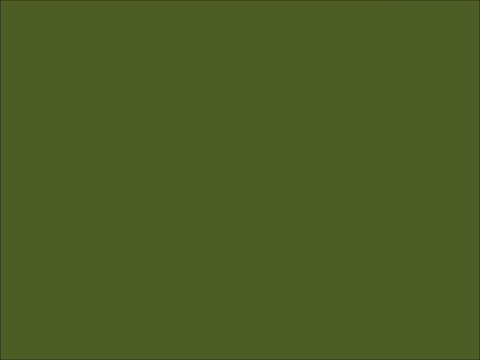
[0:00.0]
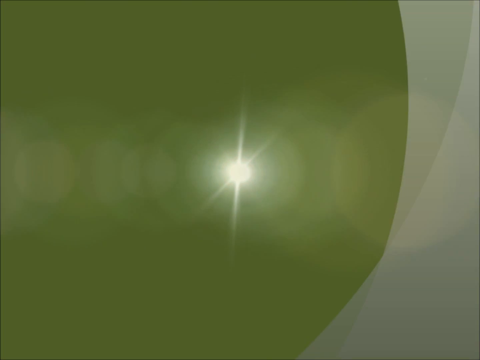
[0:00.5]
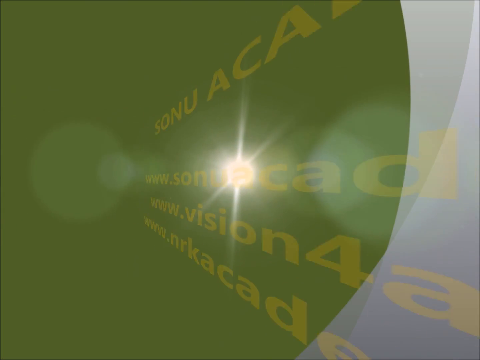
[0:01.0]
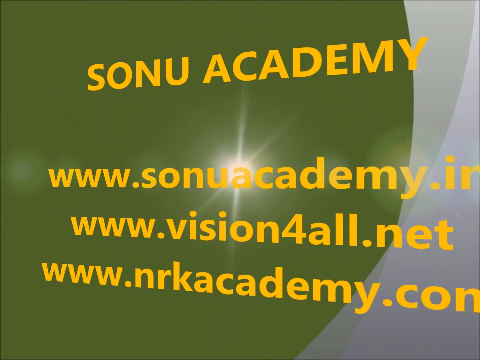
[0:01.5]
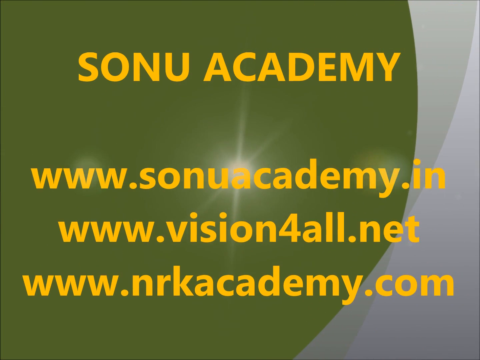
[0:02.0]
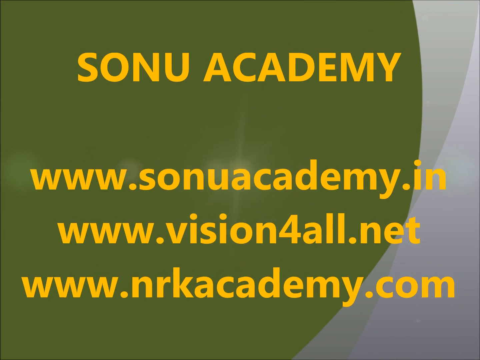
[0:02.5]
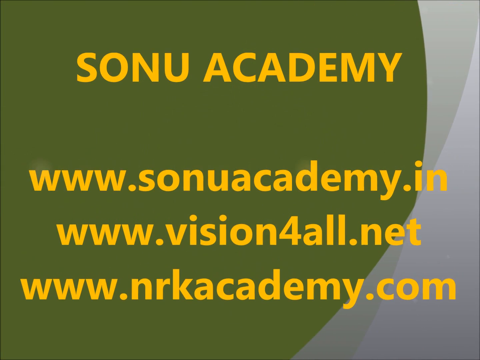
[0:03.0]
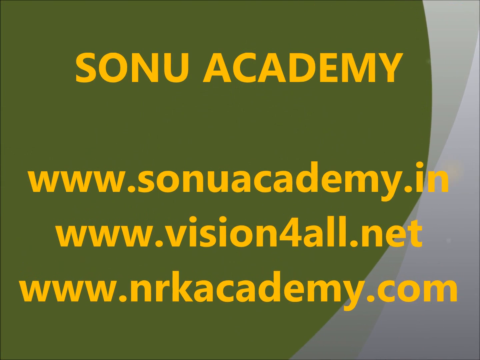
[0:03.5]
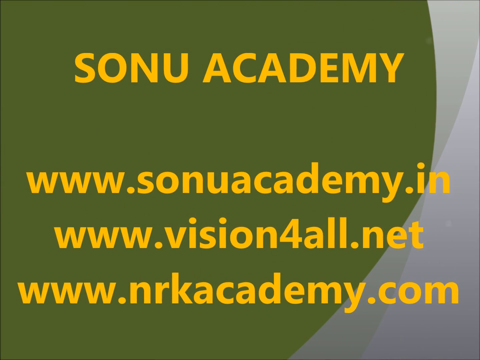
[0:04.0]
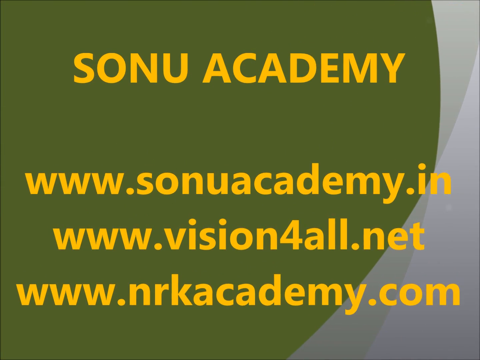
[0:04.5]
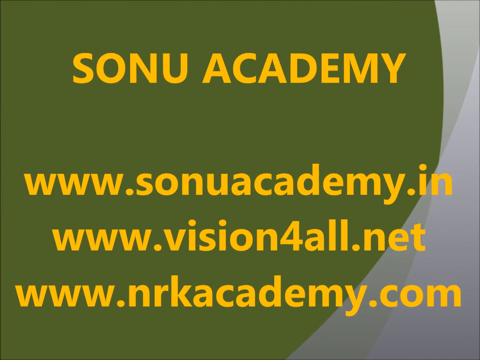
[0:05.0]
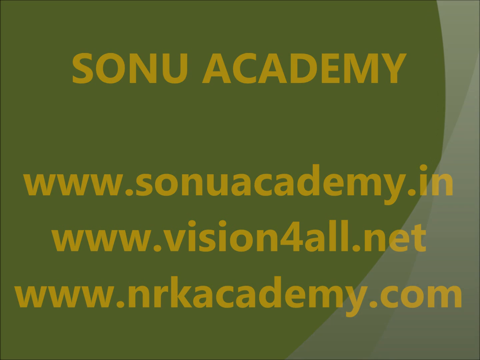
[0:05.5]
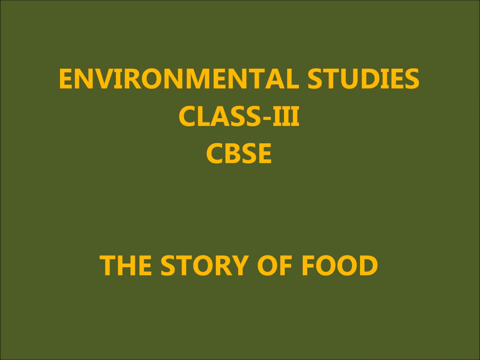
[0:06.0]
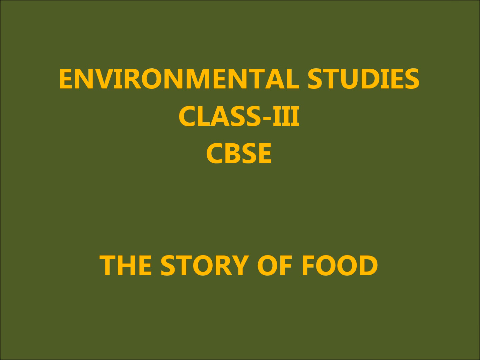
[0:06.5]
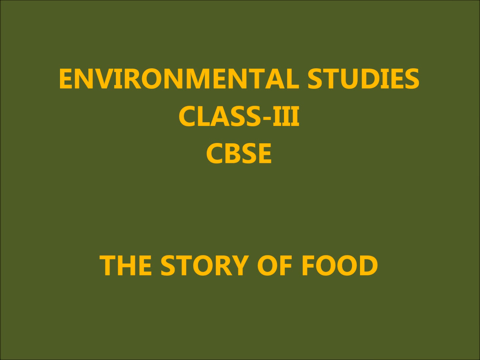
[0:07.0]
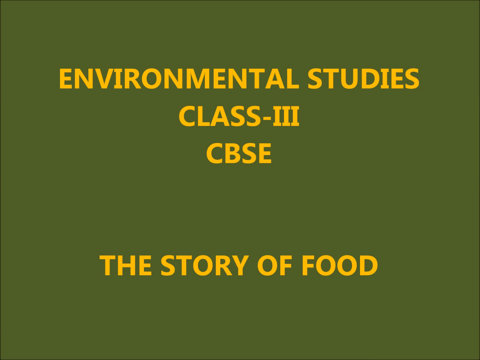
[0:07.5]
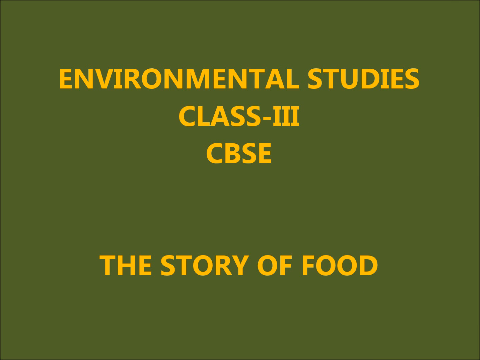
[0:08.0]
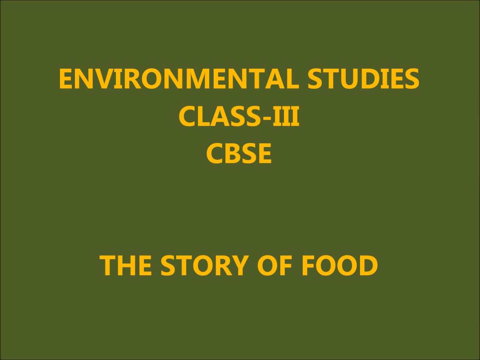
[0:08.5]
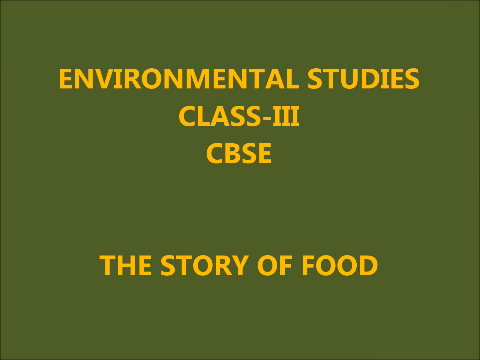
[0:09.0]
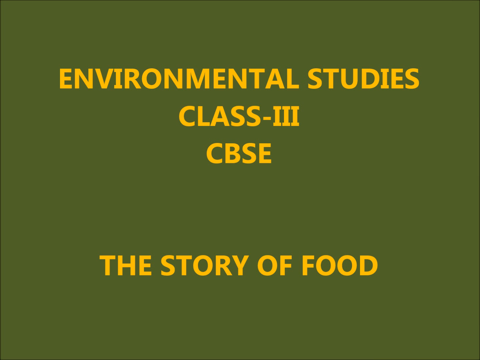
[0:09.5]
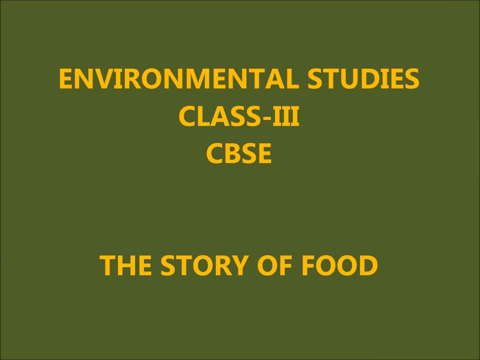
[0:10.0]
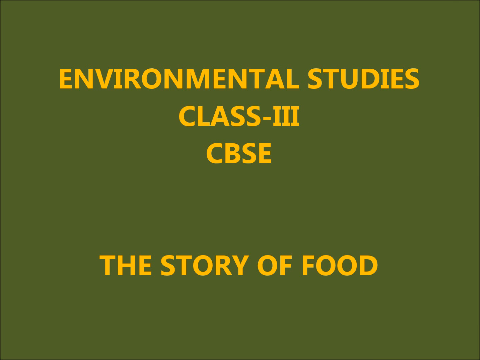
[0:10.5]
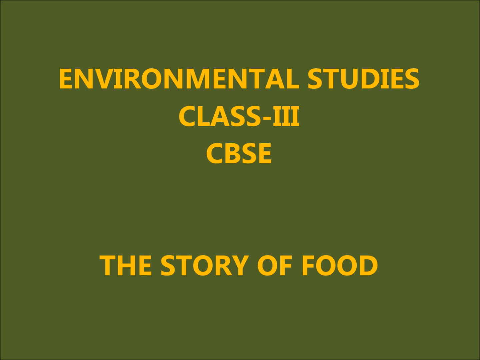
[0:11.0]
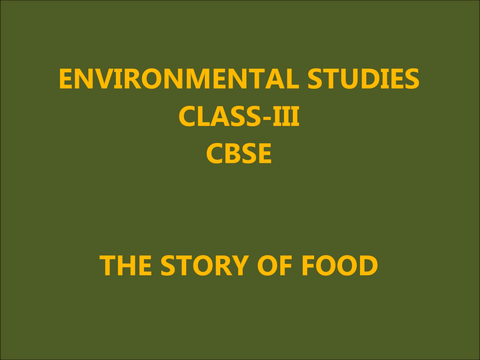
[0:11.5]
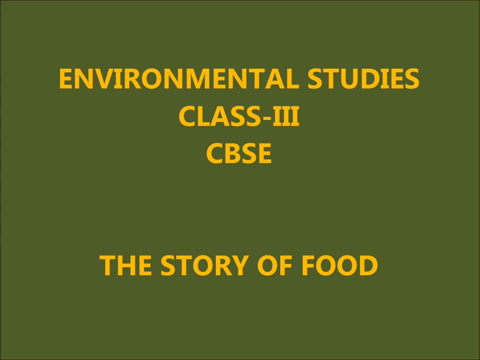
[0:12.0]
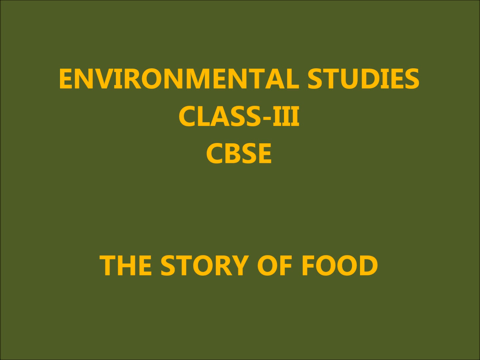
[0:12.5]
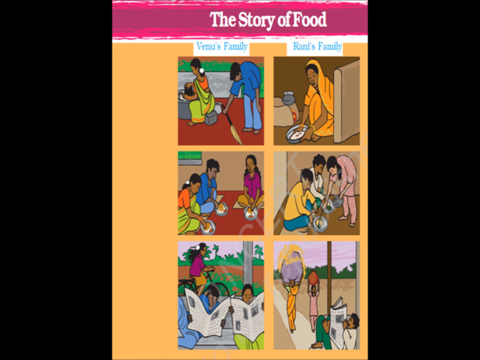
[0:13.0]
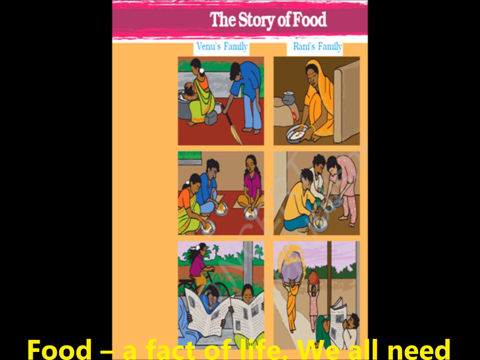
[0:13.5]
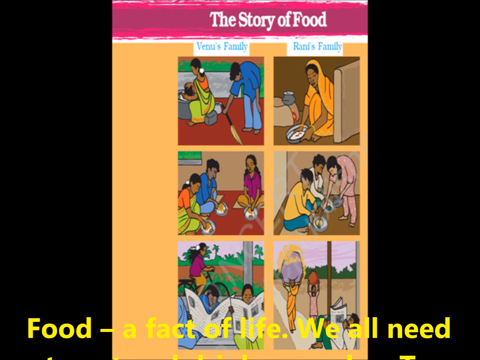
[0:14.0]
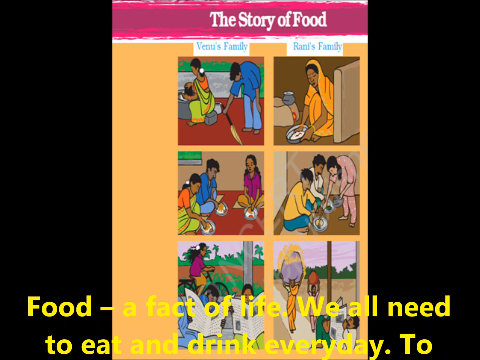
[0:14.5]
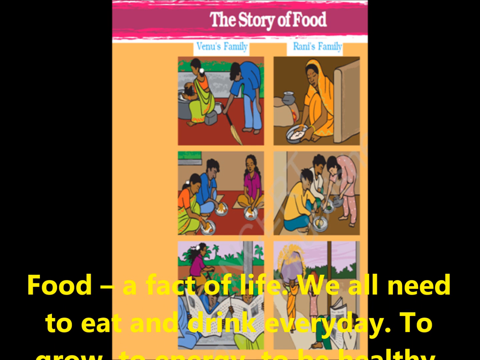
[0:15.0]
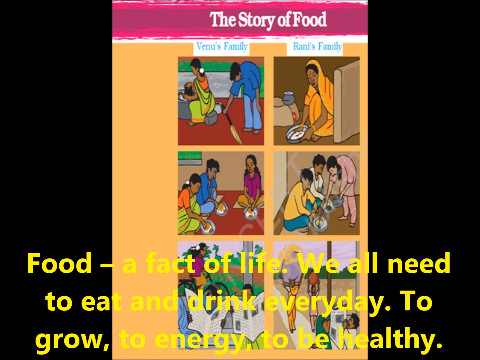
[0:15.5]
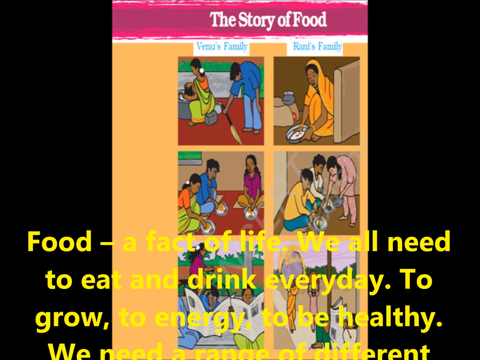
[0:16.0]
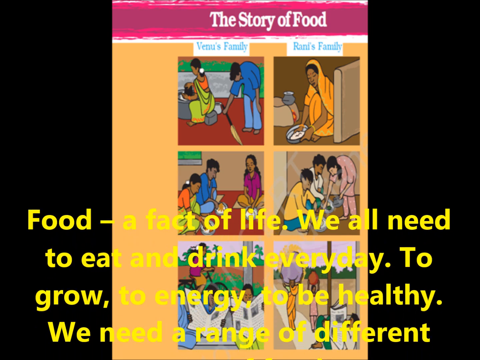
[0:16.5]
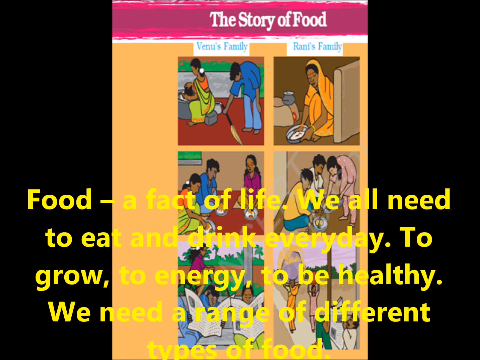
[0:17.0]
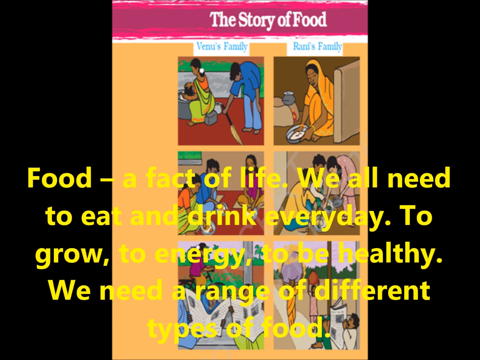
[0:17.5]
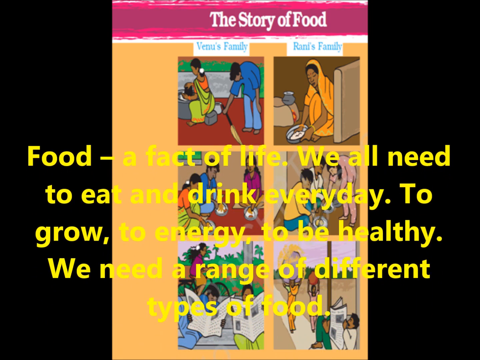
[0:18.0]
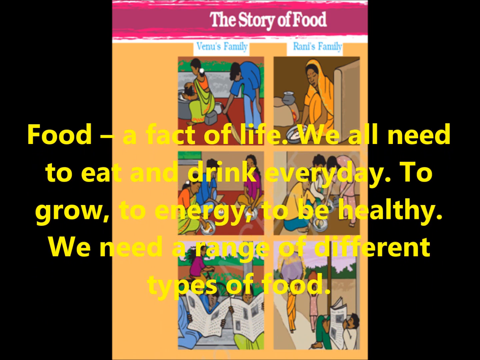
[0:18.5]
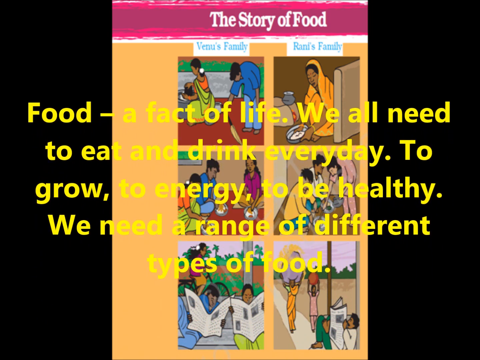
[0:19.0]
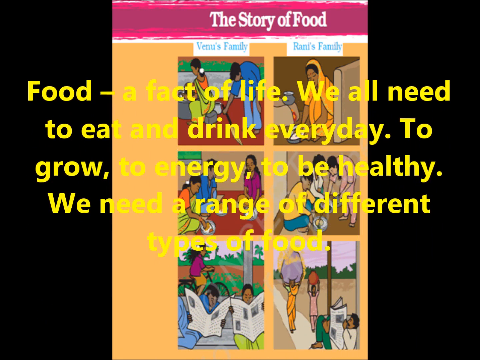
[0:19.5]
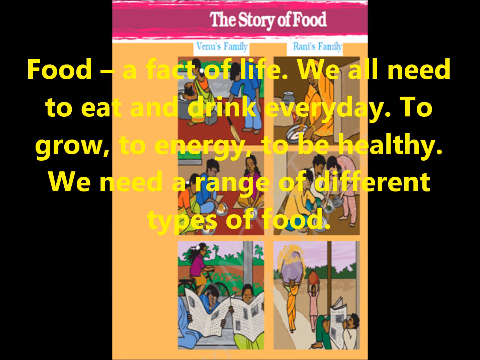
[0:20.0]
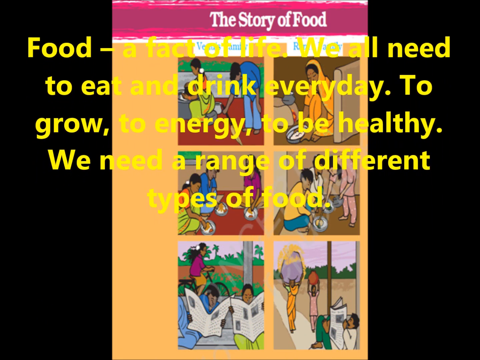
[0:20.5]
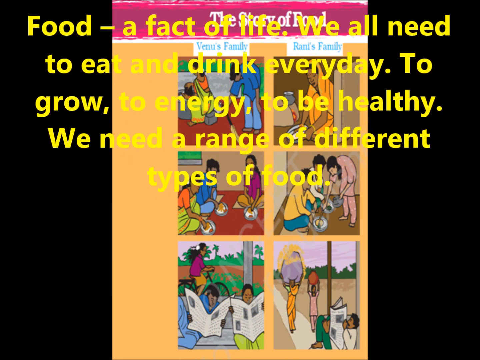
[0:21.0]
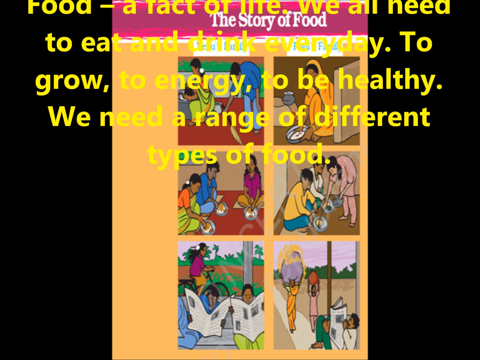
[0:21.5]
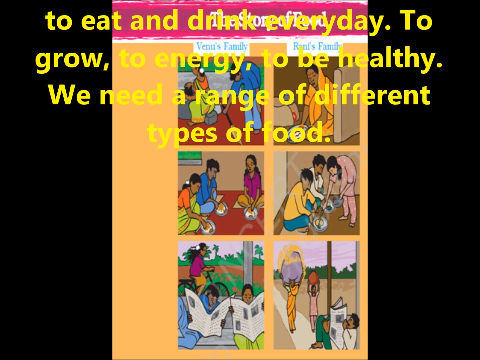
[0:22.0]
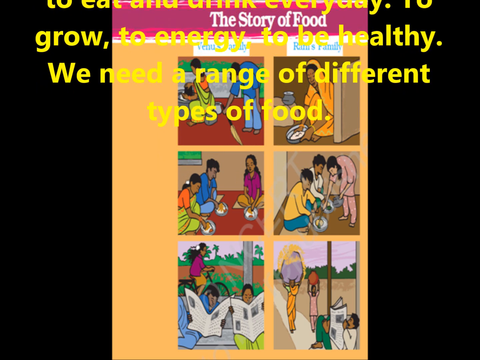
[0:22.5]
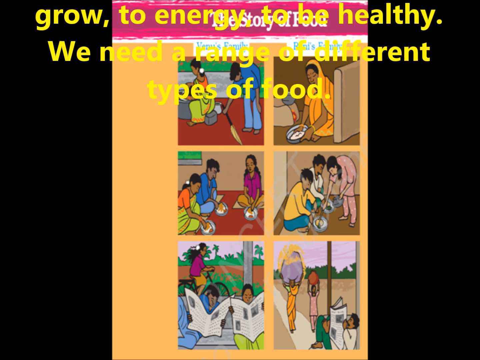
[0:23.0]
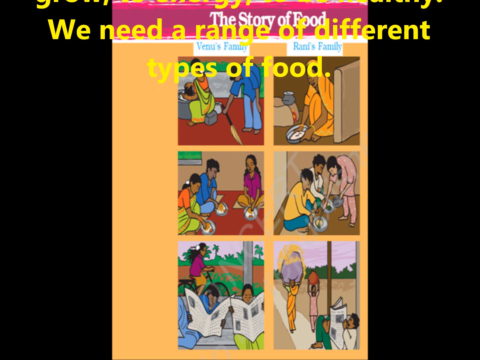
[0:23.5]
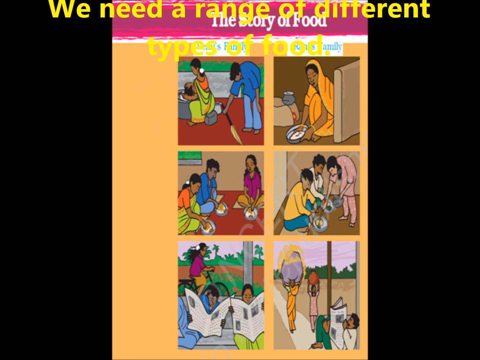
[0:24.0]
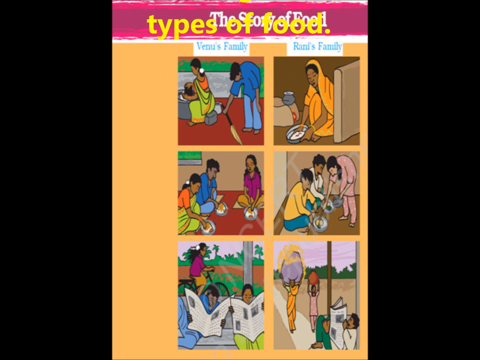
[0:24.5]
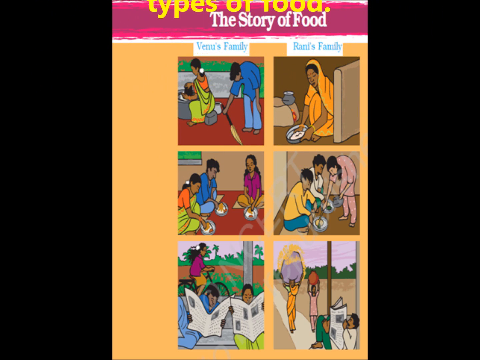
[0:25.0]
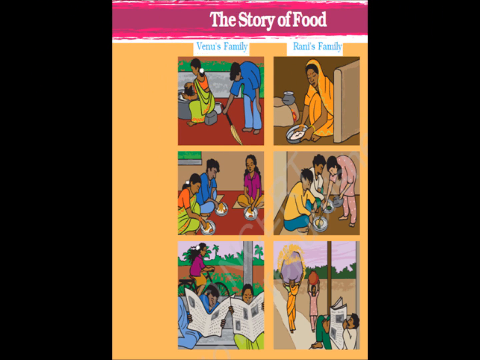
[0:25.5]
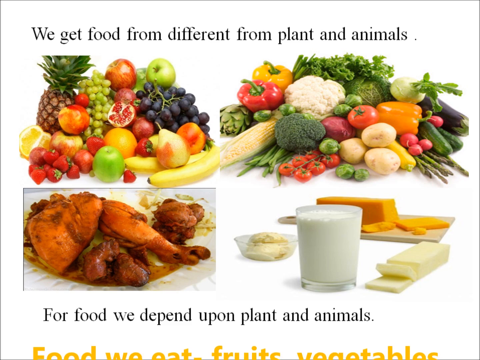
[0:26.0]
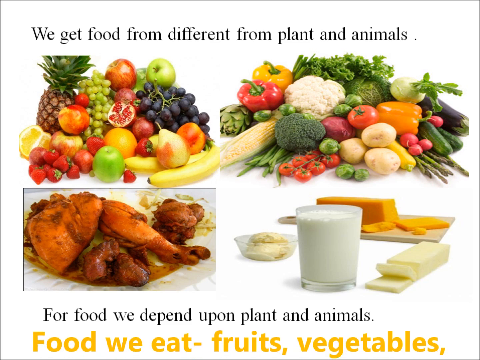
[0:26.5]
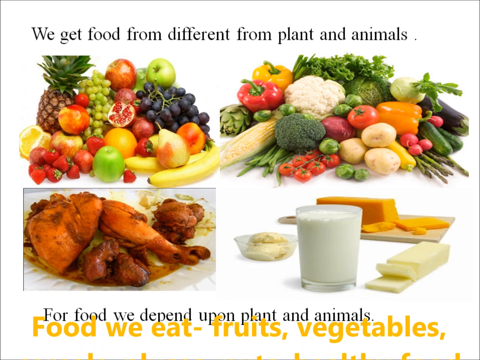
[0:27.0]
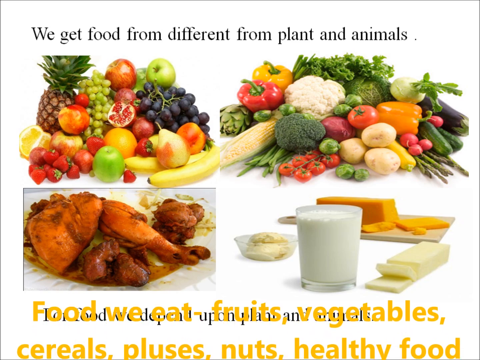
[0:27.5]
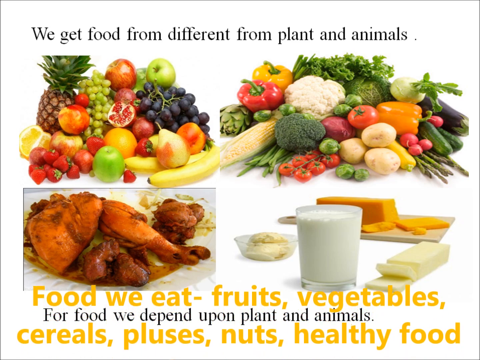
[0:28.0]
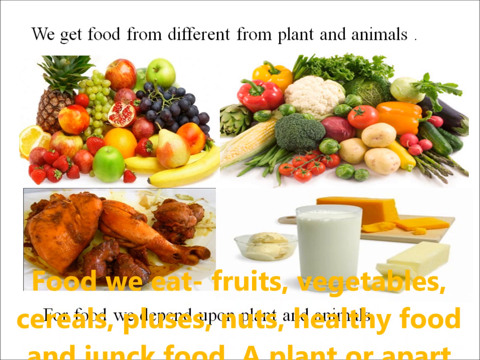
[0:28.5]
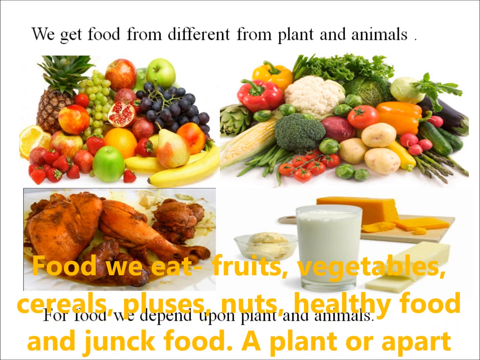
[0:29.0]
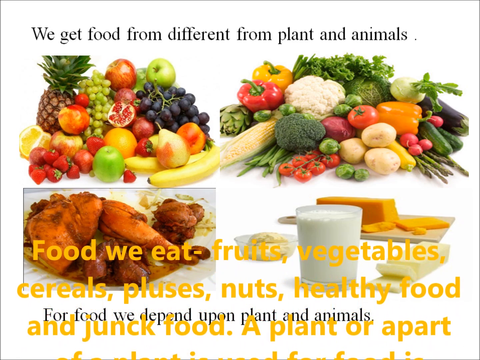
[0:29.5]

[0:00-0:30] Something called Sonu Academy appears, and at the bottom there are three different links to the academy's websites. The next screen is about environmental studies; it says "class three", and at the bottom it says "store your food". Pictures, drawings of people, then appear: one is labeled "Crow's family" and the other "Benny's family". It looks like one family might eat healthy food while the other might eat a lot of junk food. While this picture is on screen, yellow text appears that says "food is a part of their life and we all need to eat and drink every day".